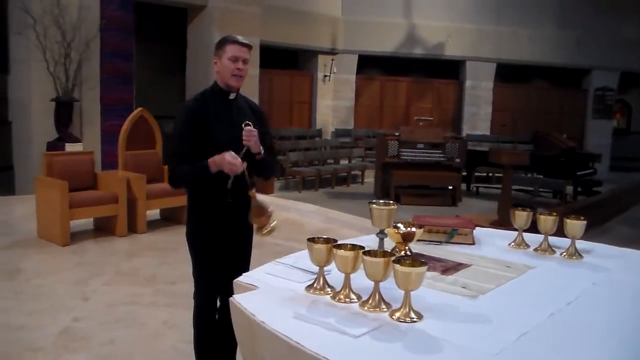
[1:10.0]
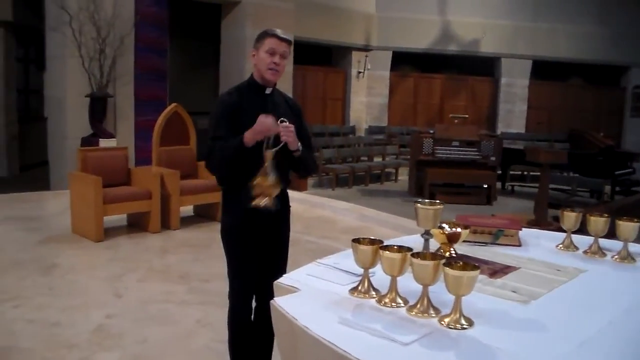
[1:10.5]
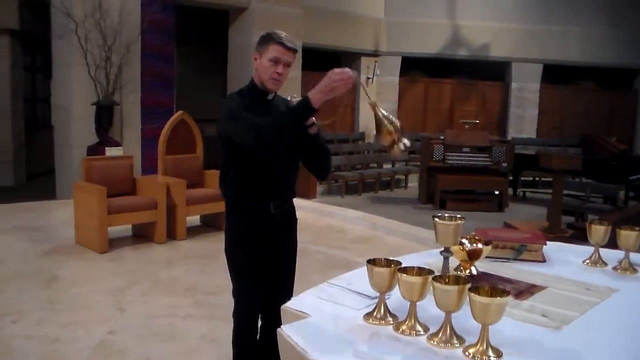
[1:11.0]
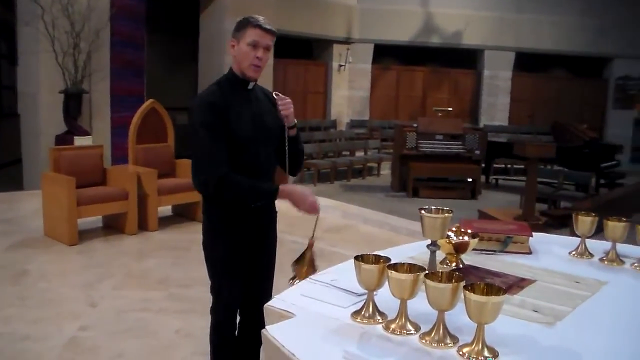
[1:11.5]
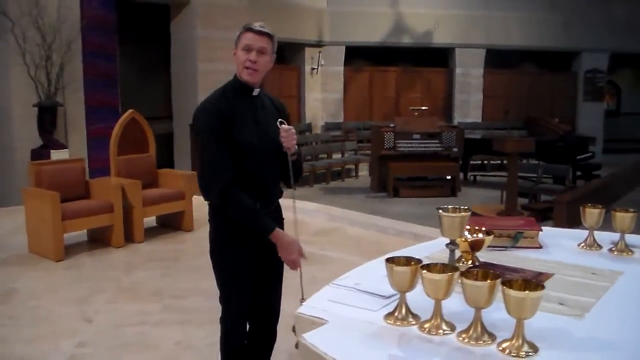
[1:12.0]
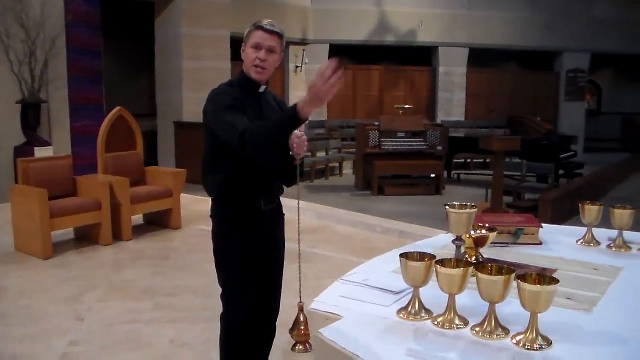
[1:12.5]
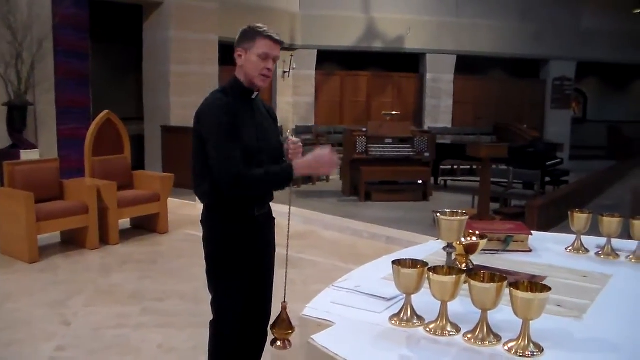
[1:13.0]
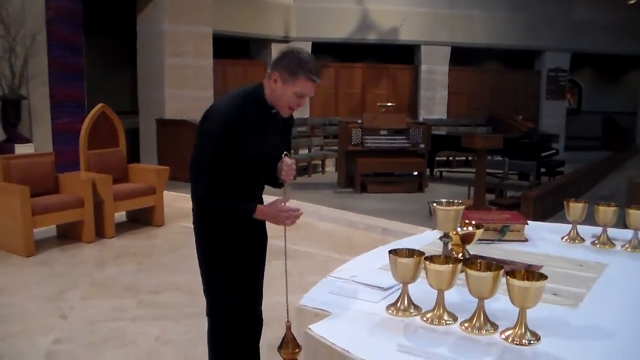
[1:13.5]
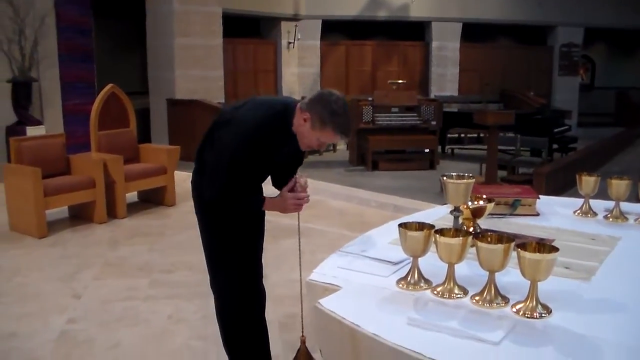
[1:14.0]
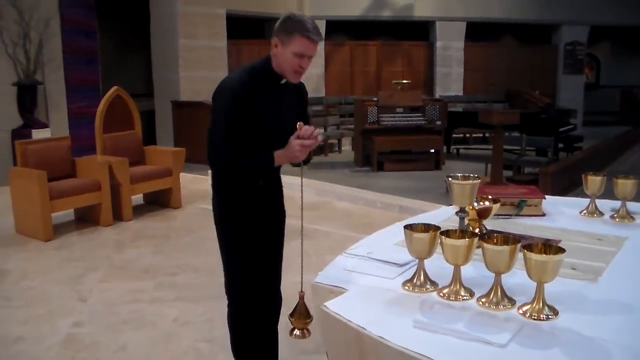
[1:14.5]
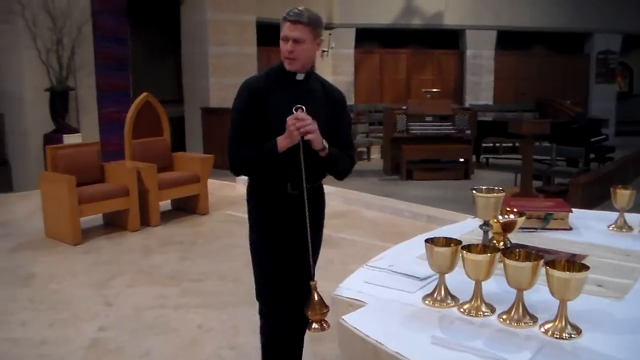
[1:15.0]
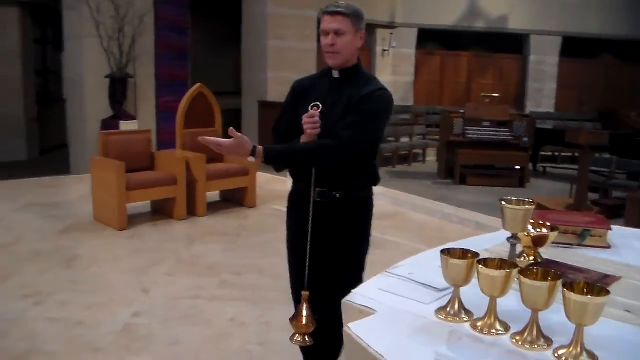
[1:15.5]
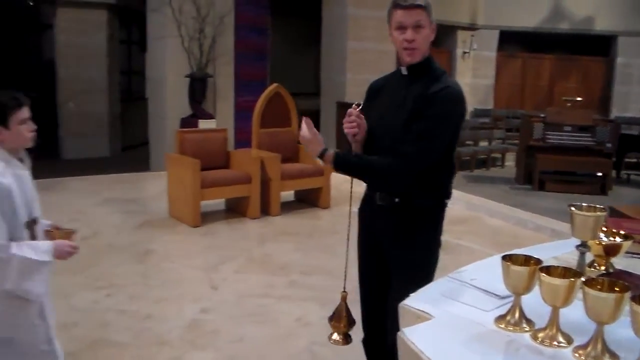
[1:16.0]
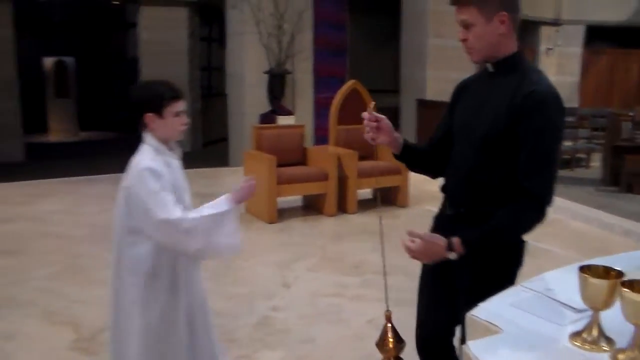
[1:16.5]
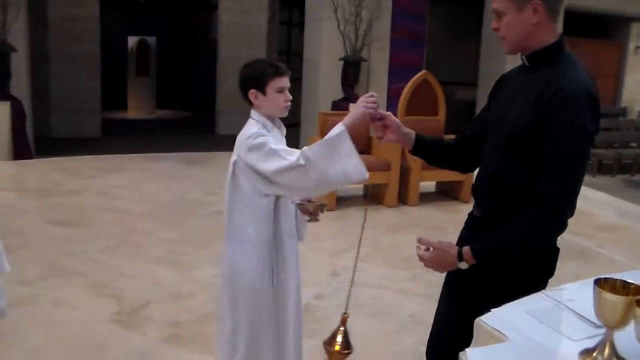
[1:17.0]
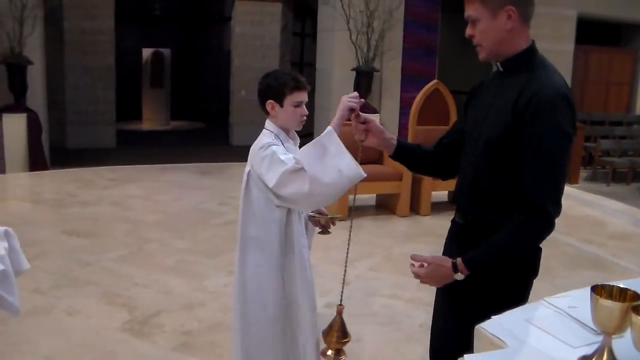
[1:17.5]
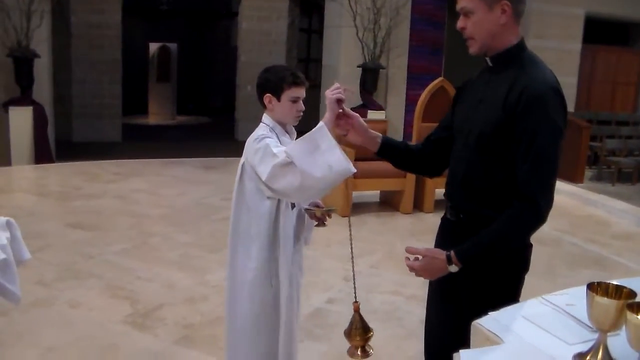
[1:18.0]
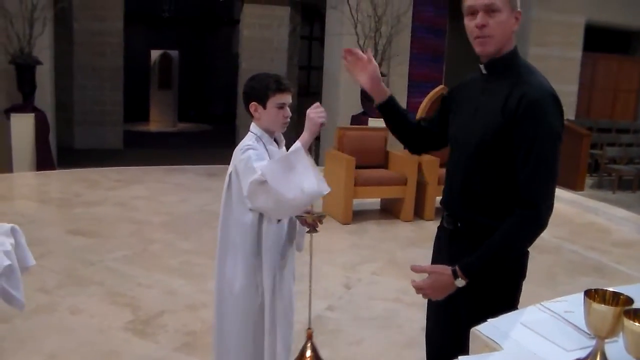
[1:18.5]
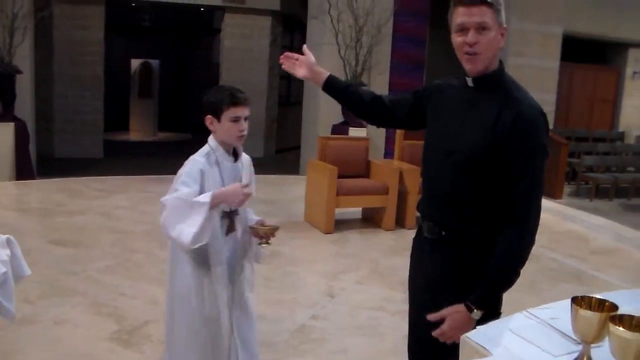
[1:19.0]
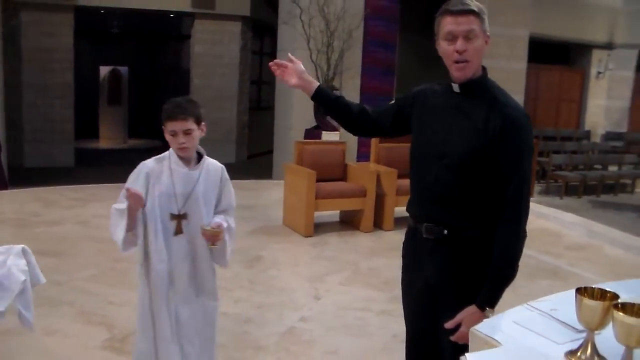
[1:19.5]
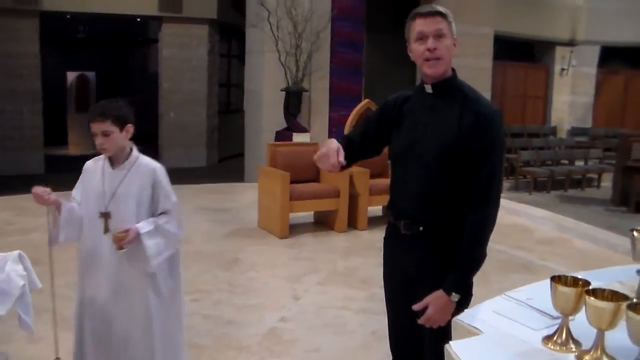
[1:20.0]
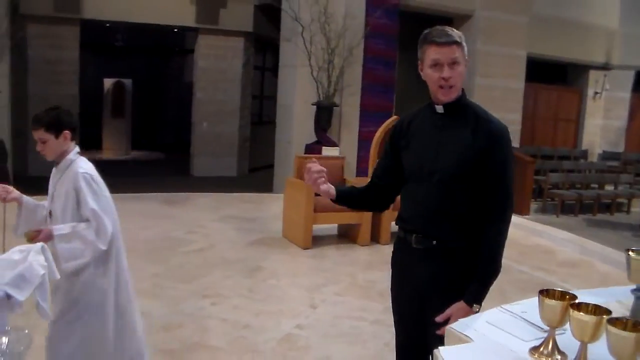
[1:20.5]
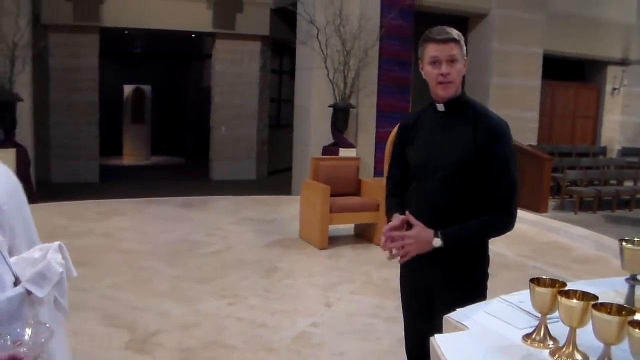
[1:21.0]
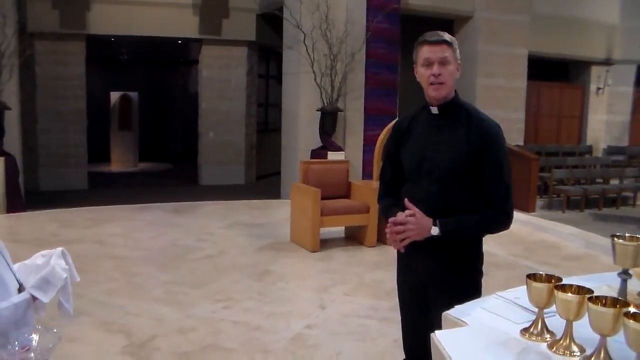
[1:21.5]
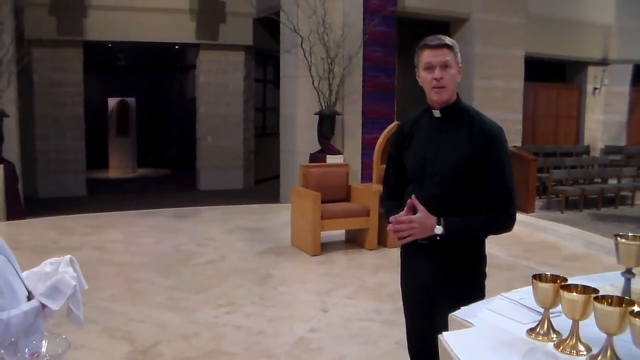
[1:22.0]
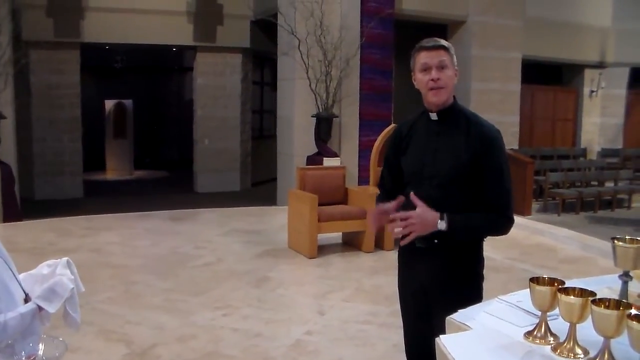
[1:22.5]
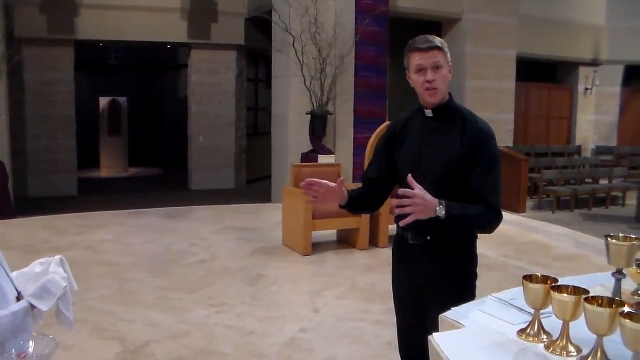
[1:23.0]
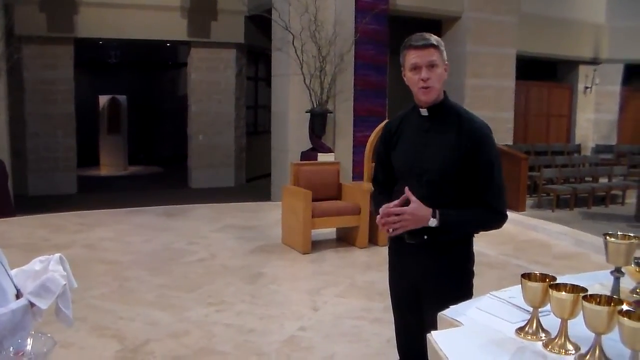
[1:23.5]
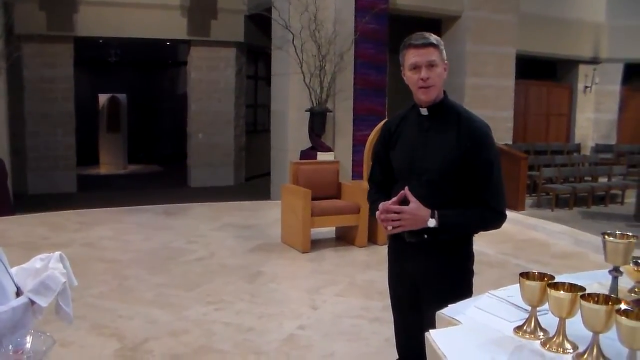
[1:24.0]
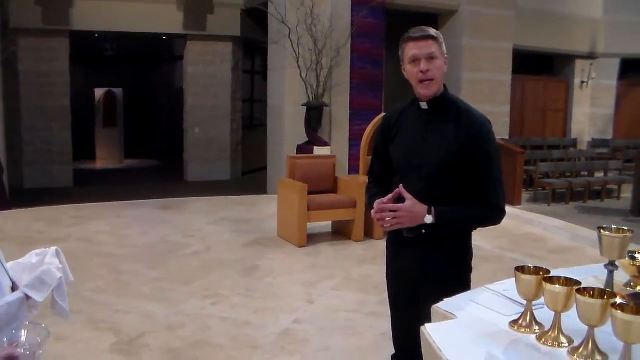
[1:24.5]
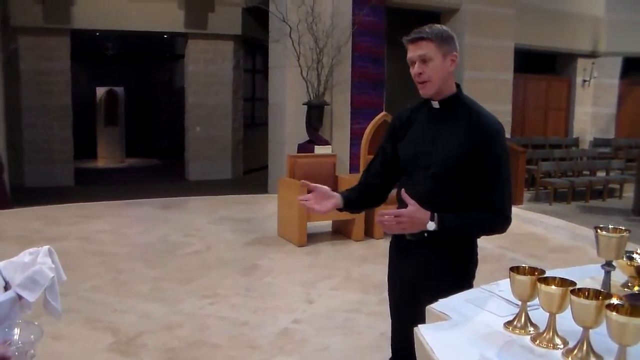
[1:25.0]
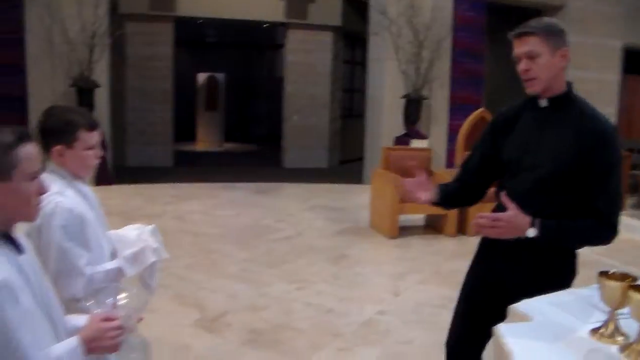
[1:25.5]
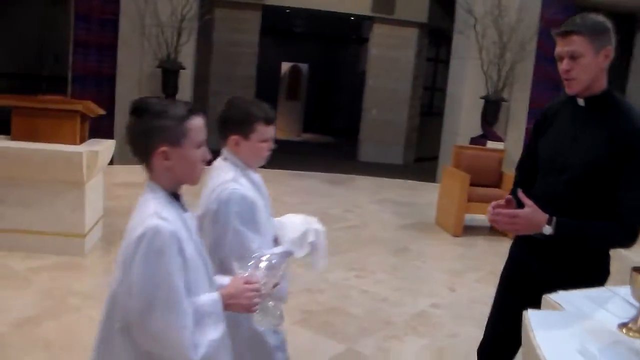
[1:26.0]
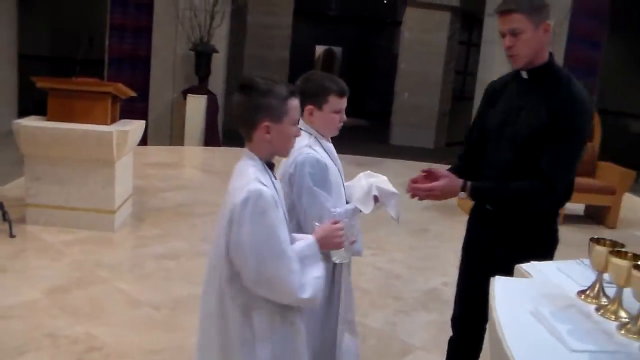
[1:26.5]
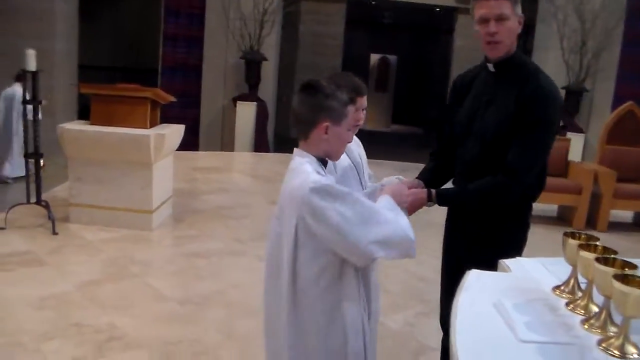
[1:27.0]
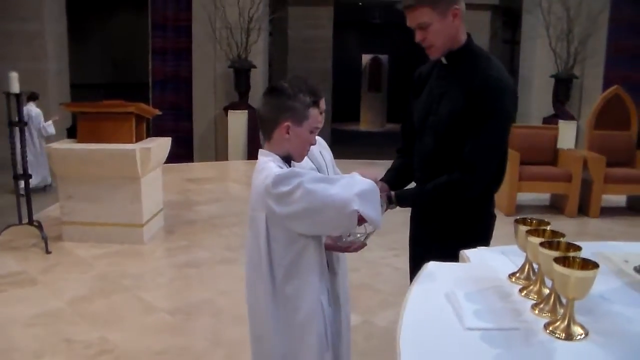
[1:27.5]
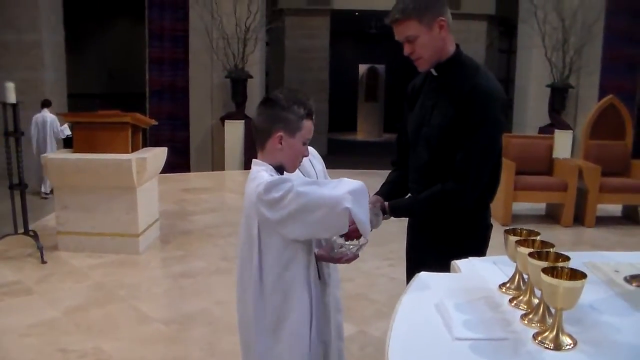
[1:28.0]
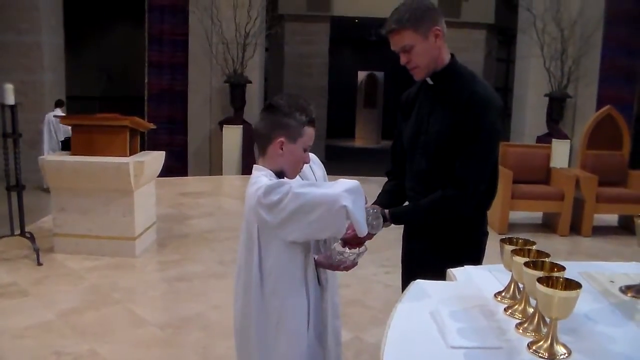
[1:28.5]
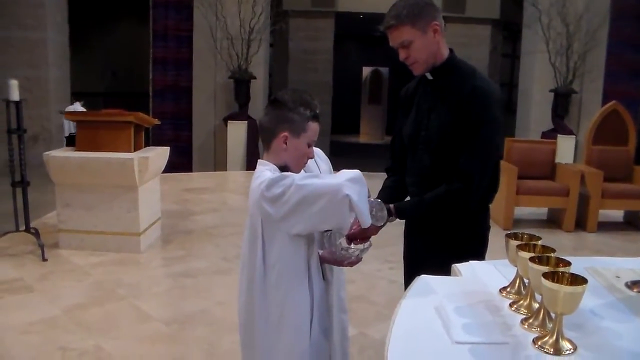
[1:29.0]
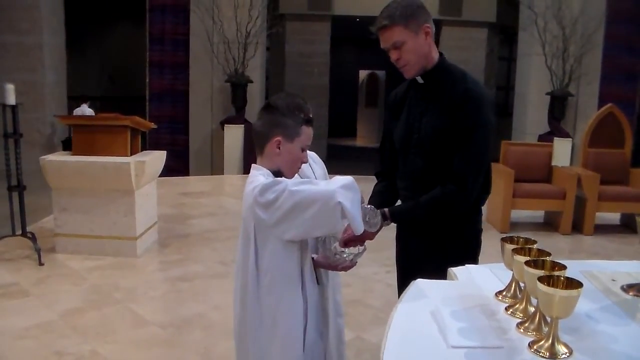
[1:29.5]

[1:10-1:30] After finishing the ritual, the priest bows once again and calls one of the boys to take the swinging incense burner away. He turns towards the camera and starts talking. The boy goes back in line with the other children and is then seen walking away, outside of the church area. The priest calls the other two boys towards him, and they walk to him and hand him the items they have been holding the entire time. The boy nearest the camera pours water over the priest's hands, and the priest washes his hands with the water. In the background is the exit out of the hall that the boy with the incense walks out from. An altar is visible on the left, and two decorative-style trees are on the left and right of one of the exits to this area of the church.